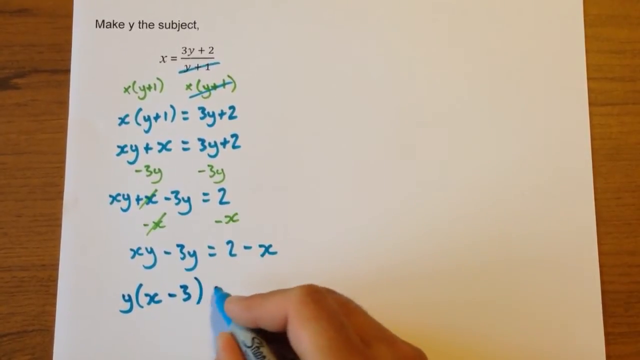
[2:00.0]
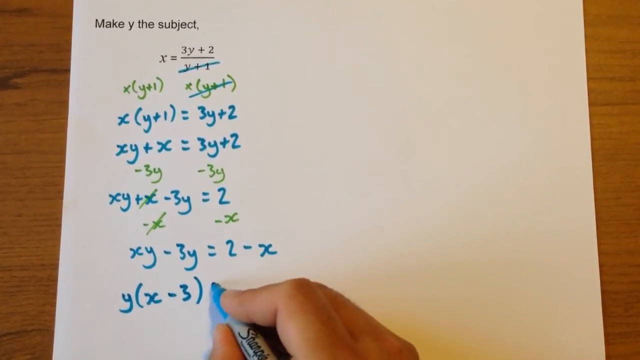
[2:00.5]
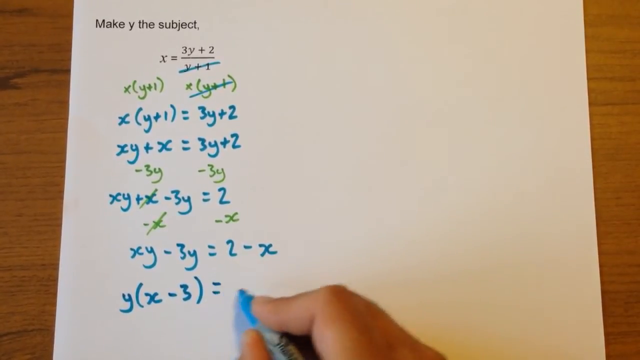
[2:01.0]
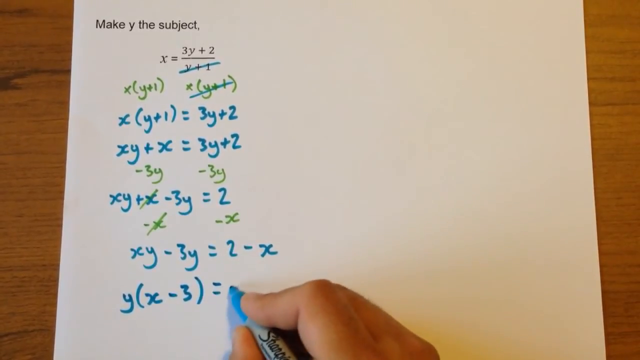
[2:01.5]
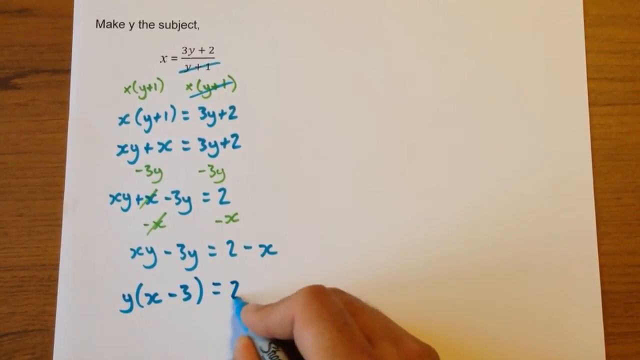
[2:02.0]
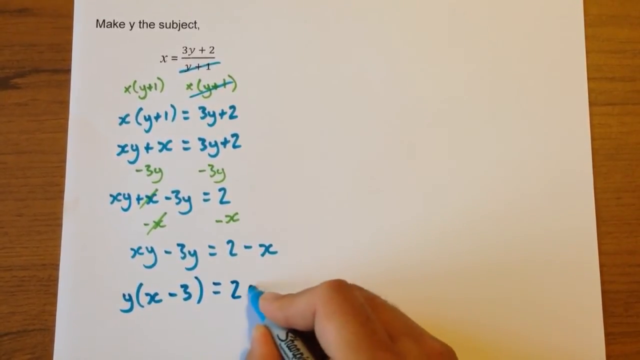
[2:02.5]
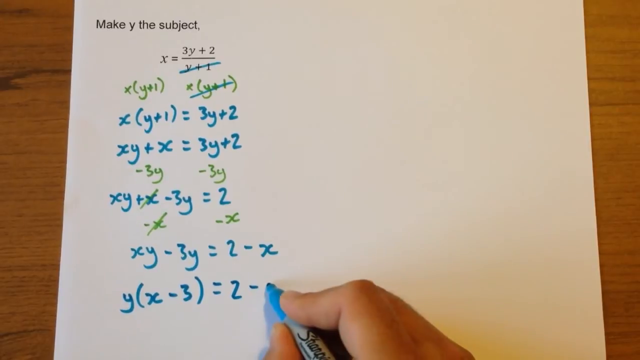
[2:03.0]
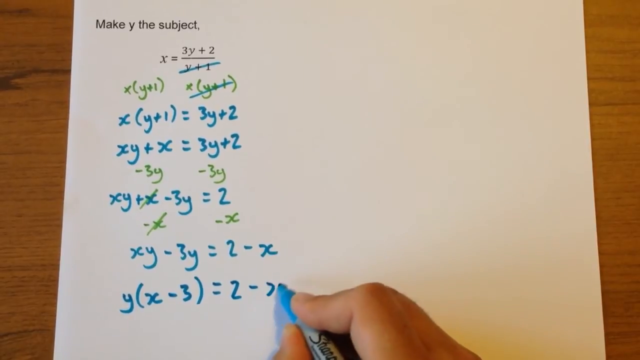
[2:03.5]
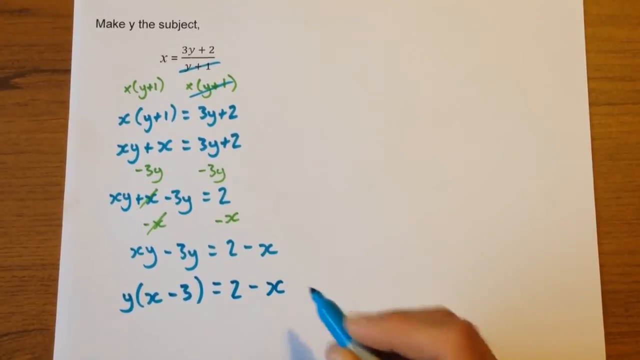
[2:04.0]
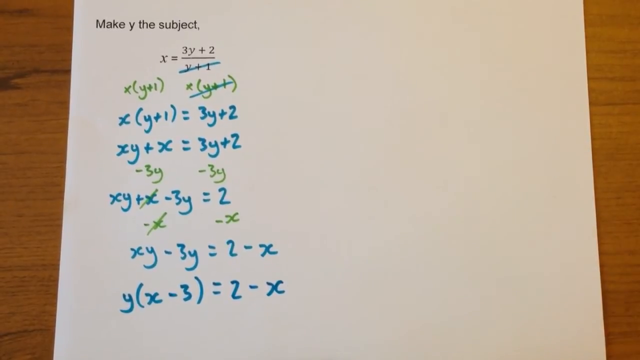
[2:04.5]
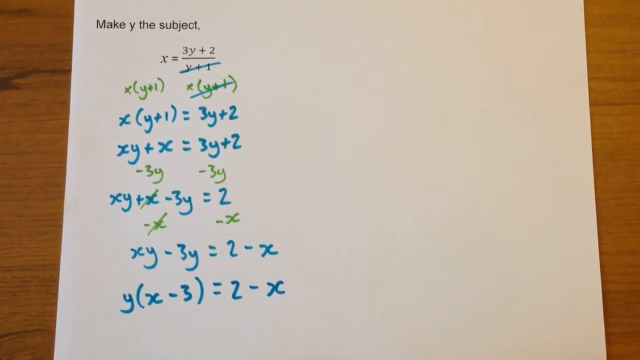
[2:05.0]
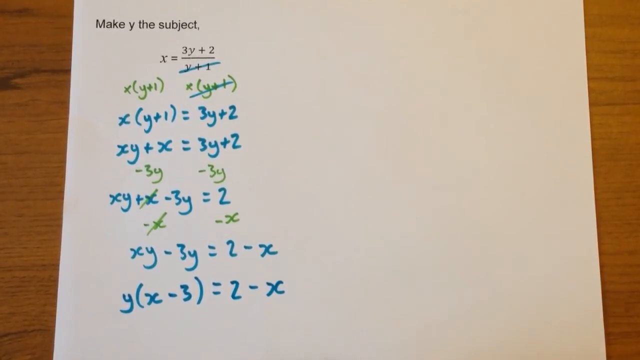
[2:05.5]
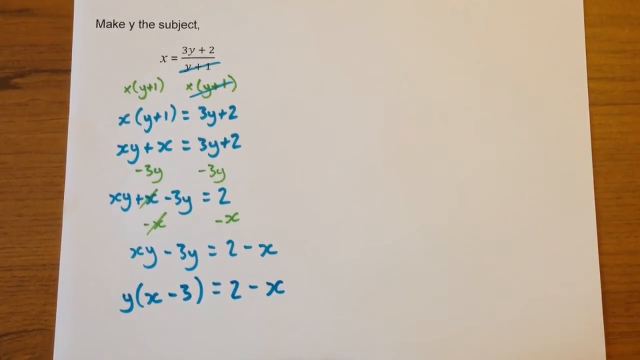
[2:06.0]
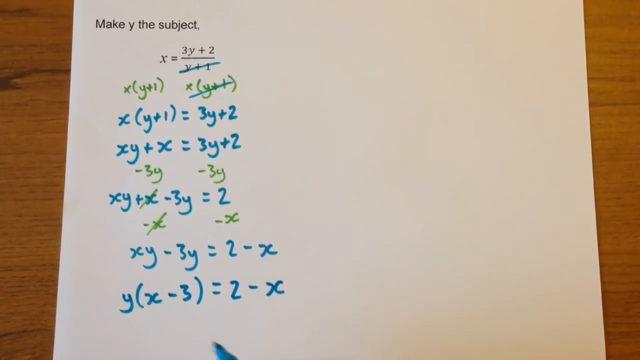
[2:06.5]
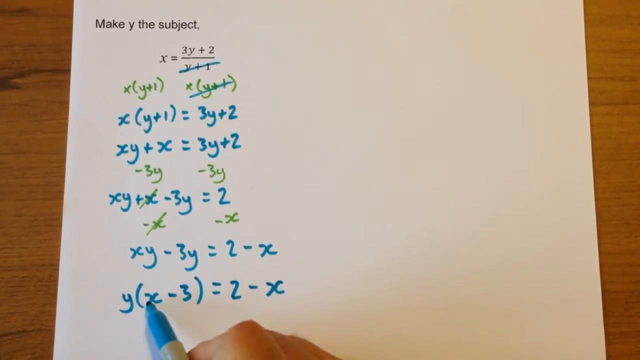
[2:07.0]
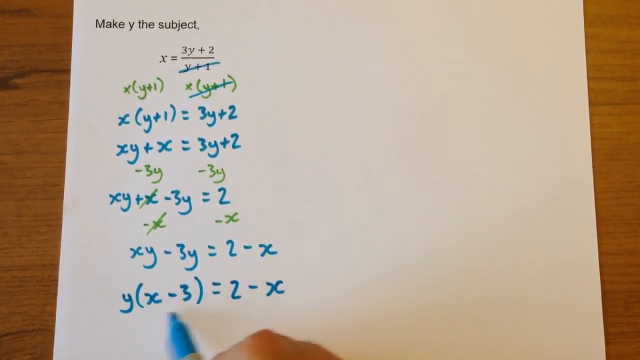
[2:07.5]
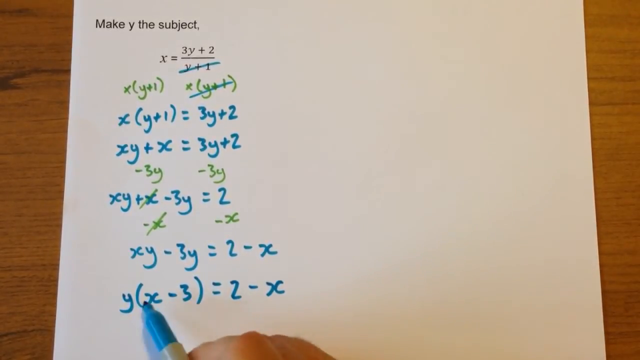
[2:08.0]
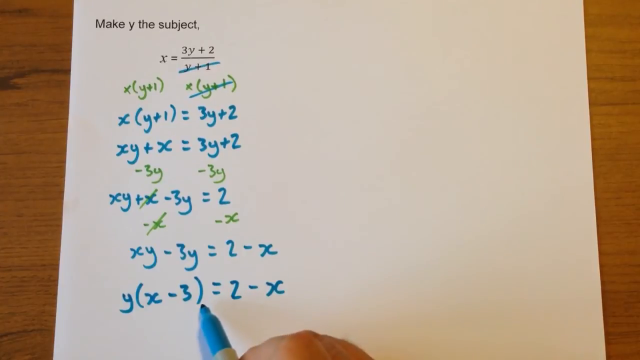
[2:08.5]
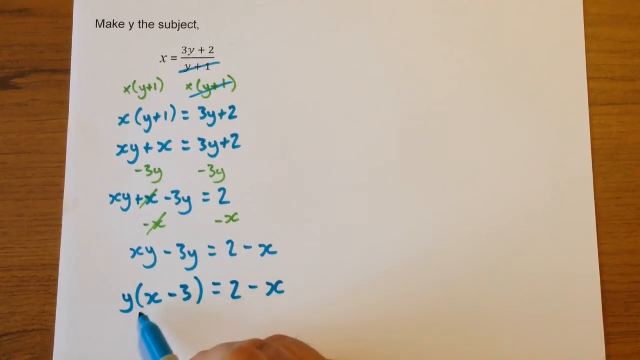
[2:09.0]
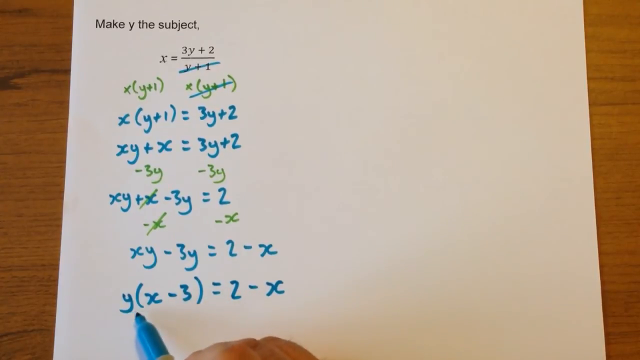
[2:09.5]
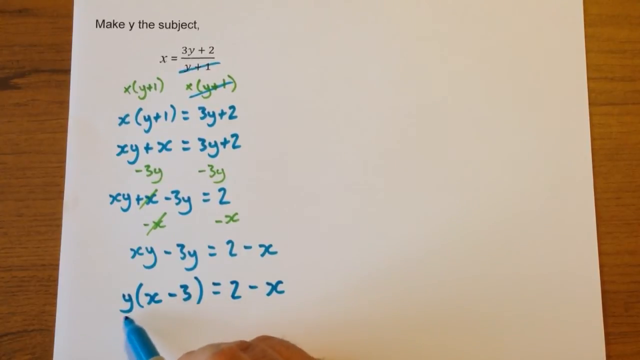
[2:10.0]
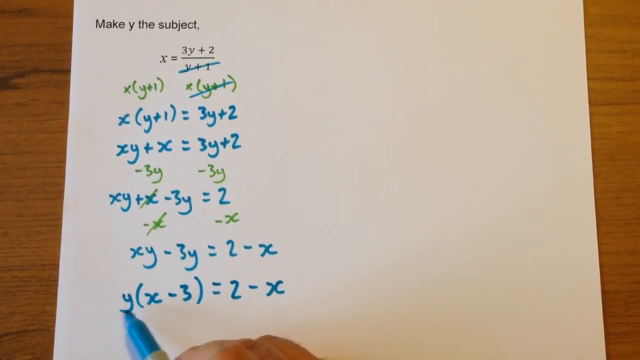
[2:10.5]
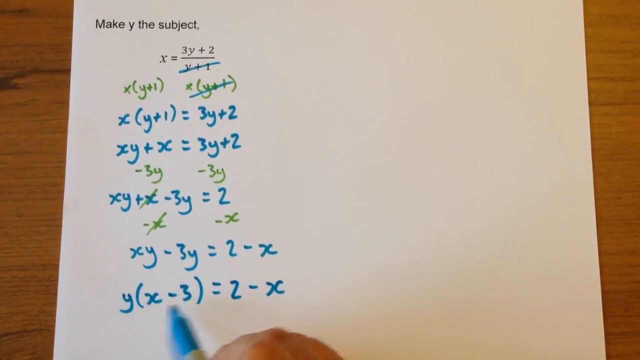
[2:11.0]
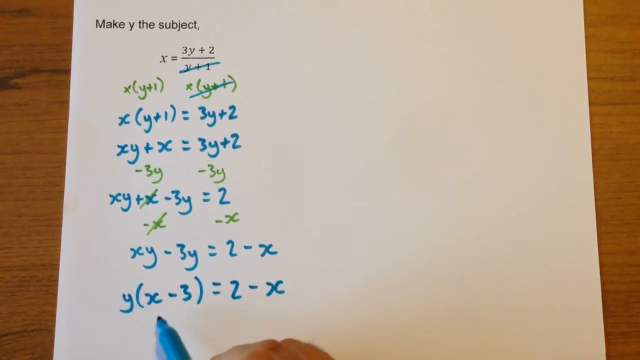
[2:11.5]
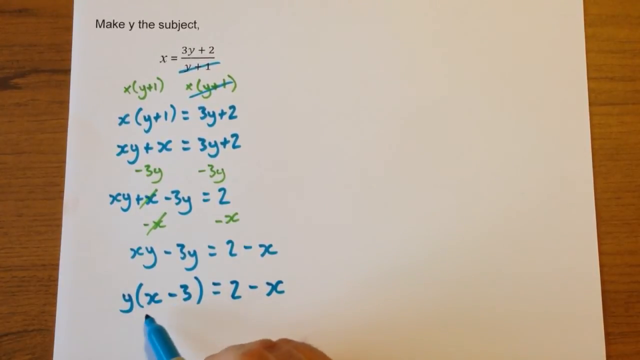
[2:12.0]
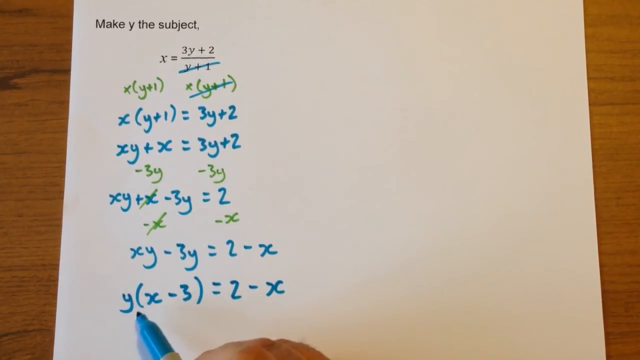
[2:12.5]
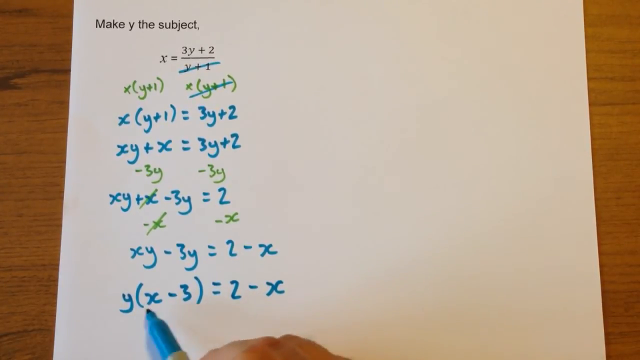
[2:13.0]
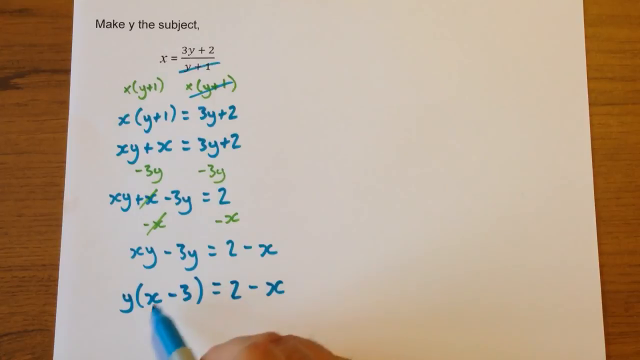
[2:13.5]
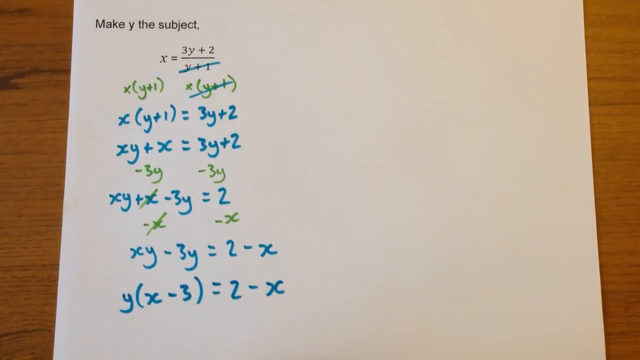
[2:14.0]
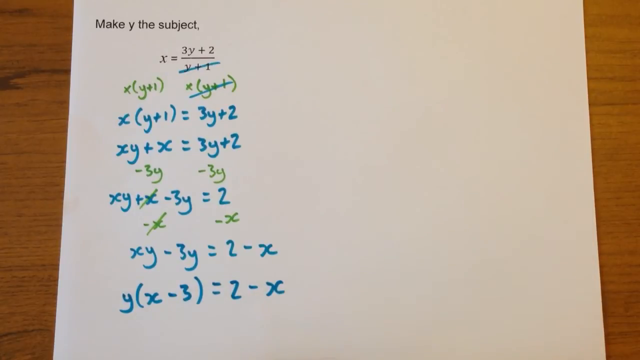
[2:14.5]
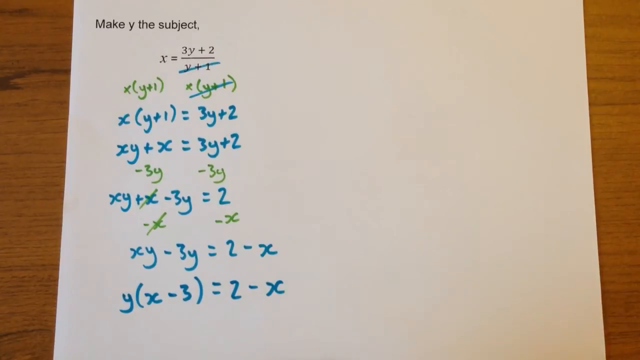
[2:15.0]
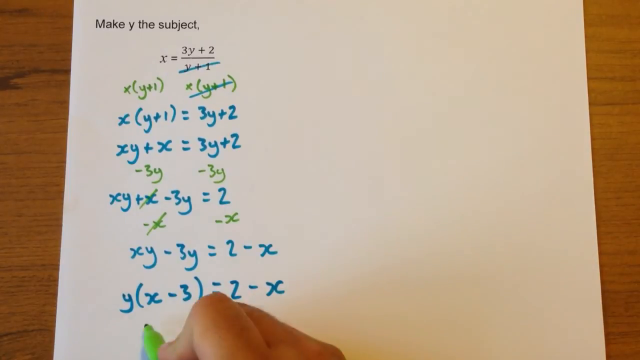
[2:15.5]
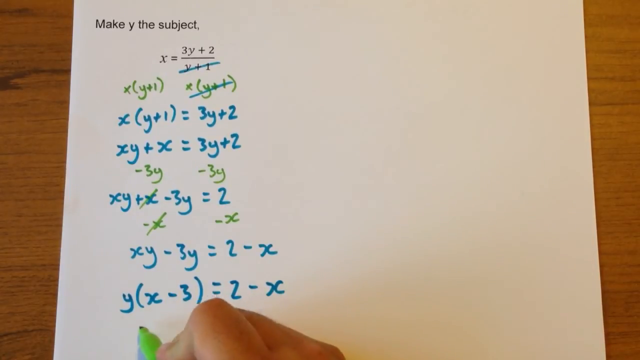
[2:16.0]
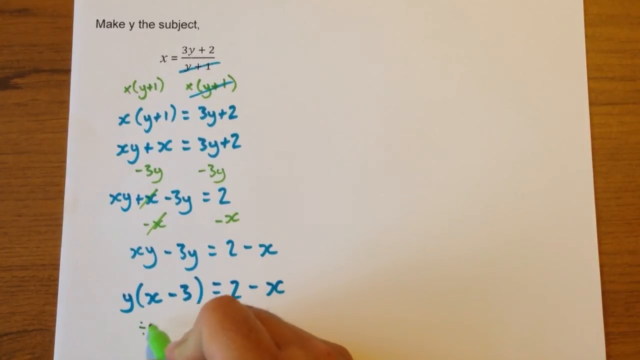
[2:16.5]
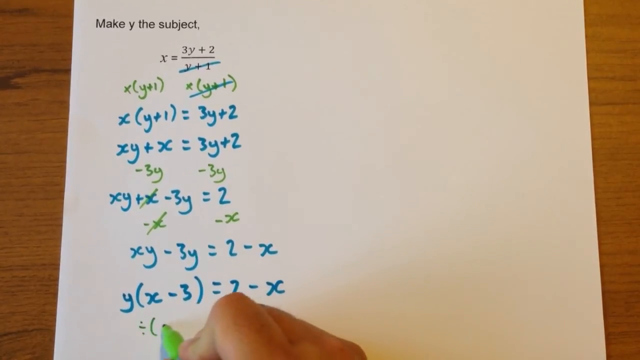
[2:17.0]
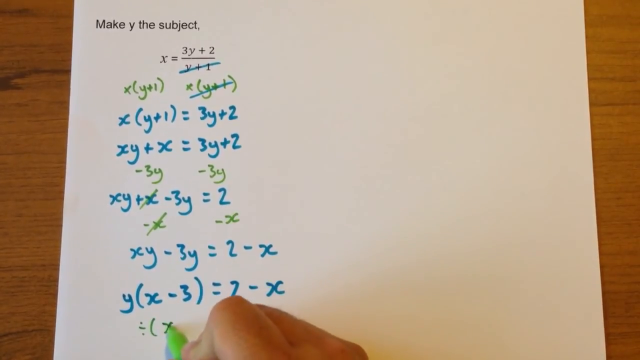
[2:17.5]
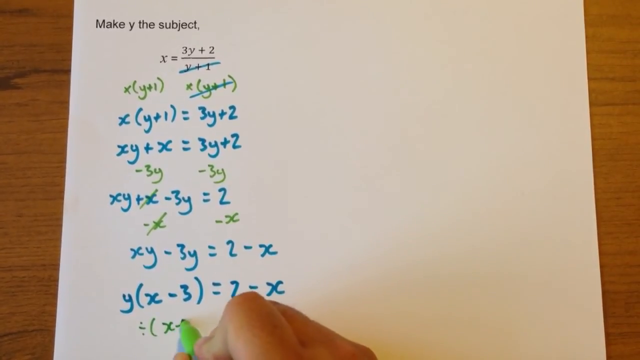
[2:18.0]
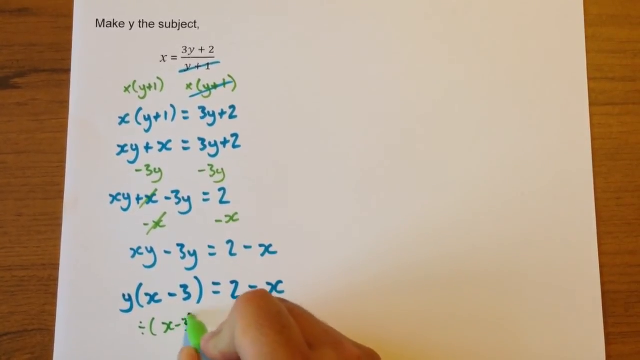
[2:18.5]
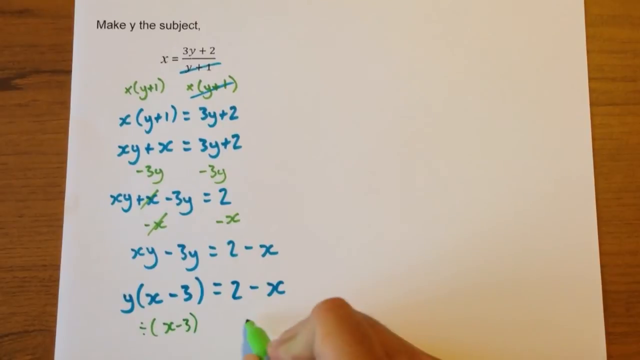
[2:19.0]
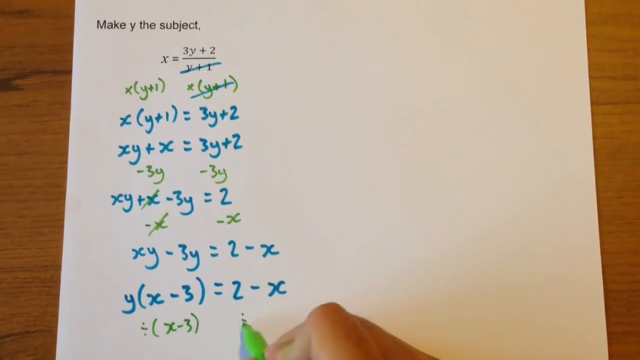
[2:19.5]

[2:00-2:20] The solving of the equation continues. At the top, in black lettering, is the equation x = (3y + 2)/(x + 1). A Caucasian right hand uses a blue or green Sharpie. From the middle down: in blue, xy + x − 3y = 2; underneath that, in green, −x and then −x again; underneath that, in blue, xy − 3y = 2 − x; and finally, in blue, y(x − 3) = 2 − x.